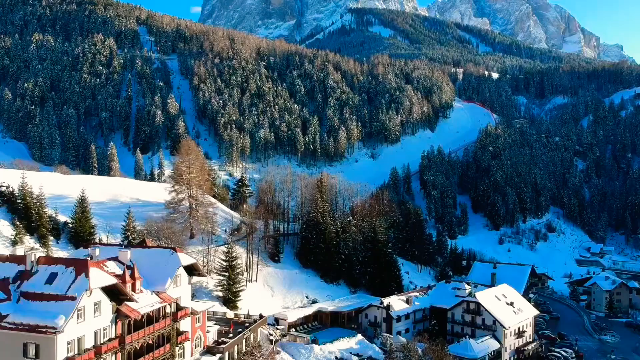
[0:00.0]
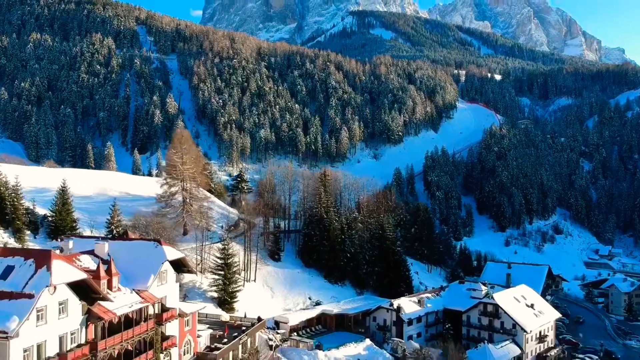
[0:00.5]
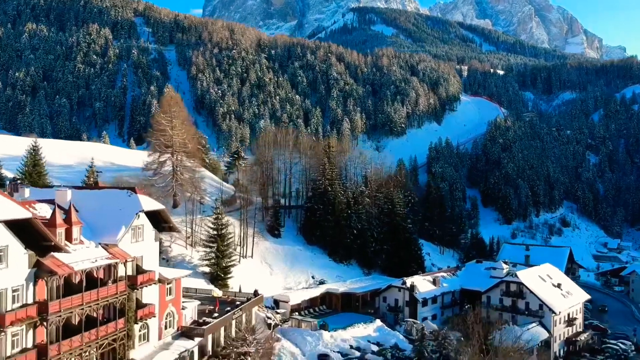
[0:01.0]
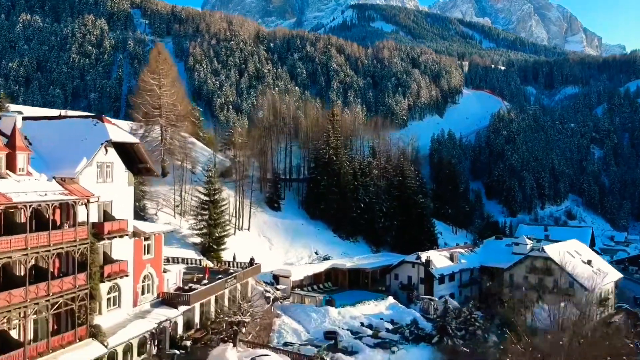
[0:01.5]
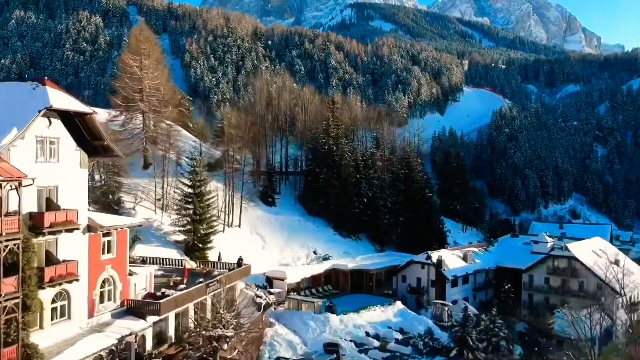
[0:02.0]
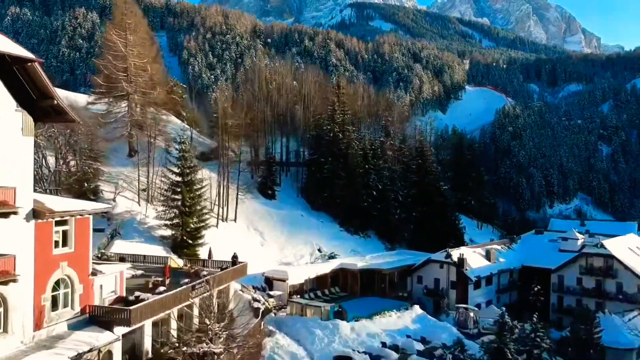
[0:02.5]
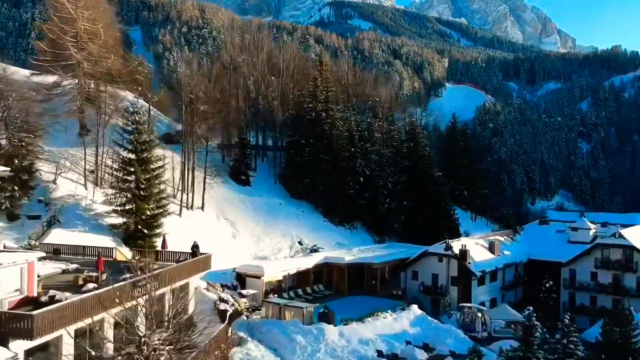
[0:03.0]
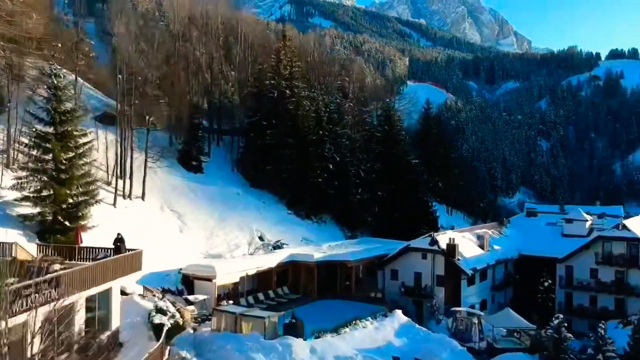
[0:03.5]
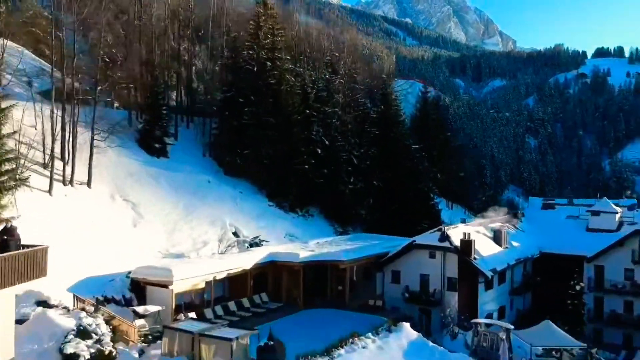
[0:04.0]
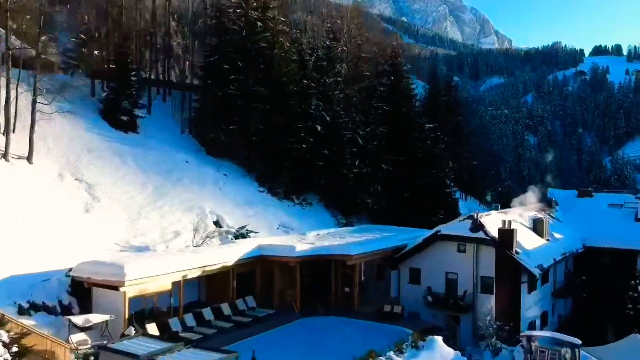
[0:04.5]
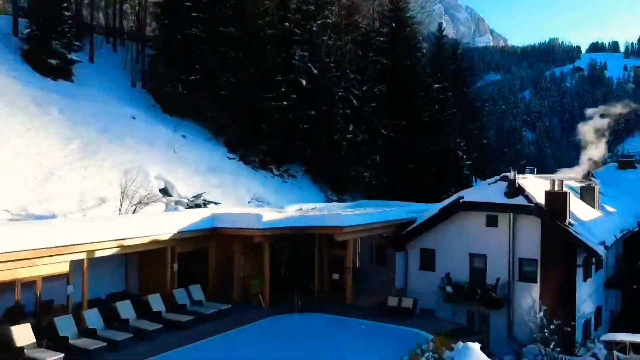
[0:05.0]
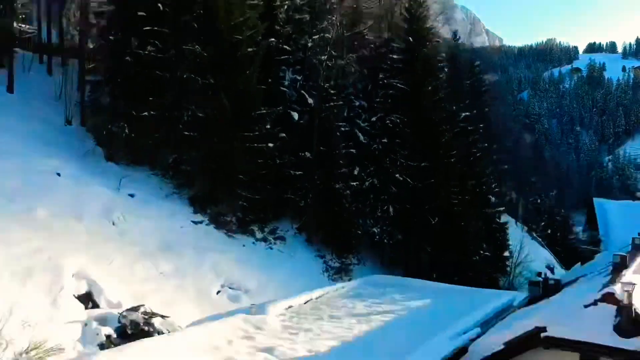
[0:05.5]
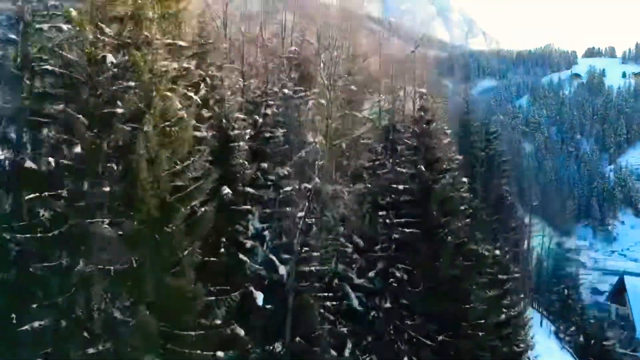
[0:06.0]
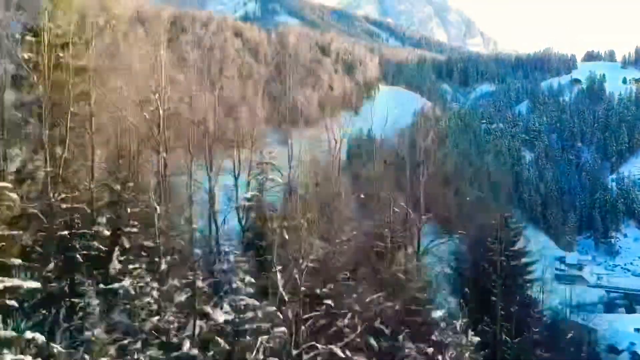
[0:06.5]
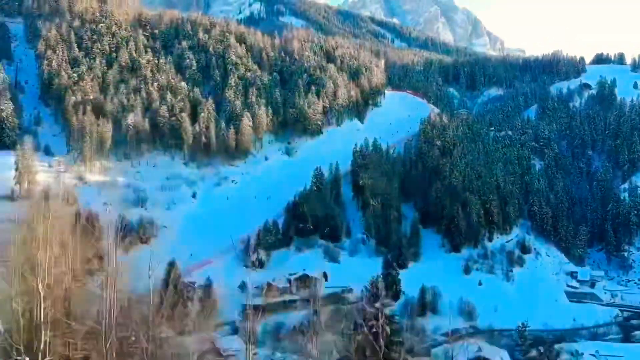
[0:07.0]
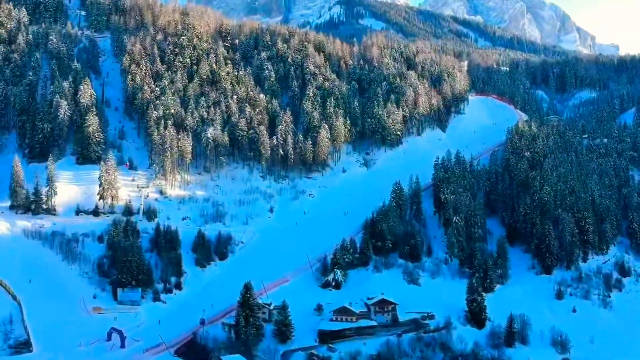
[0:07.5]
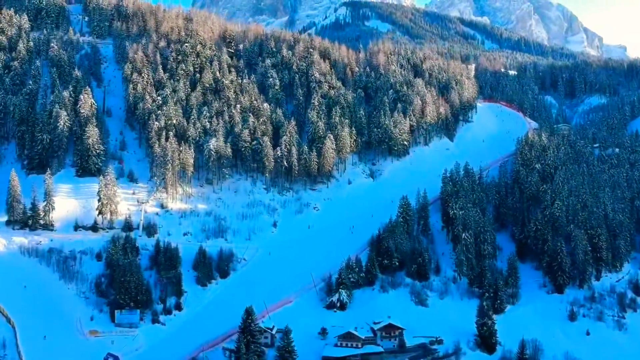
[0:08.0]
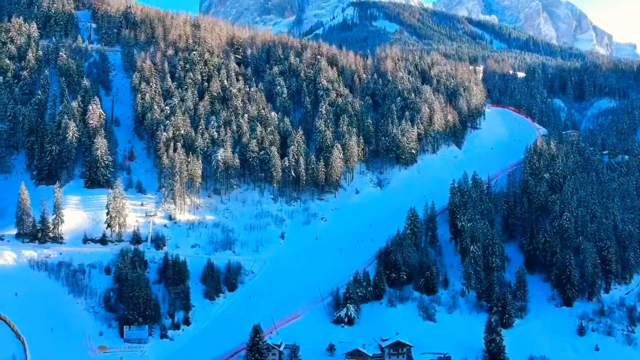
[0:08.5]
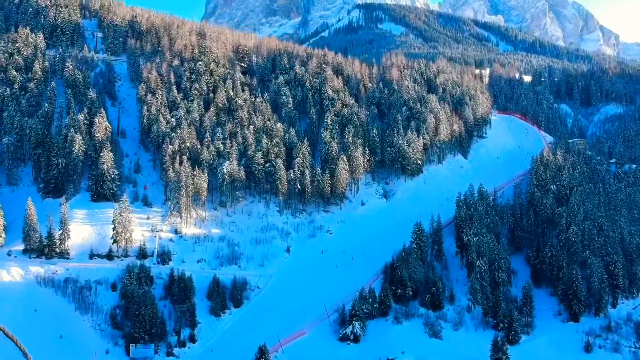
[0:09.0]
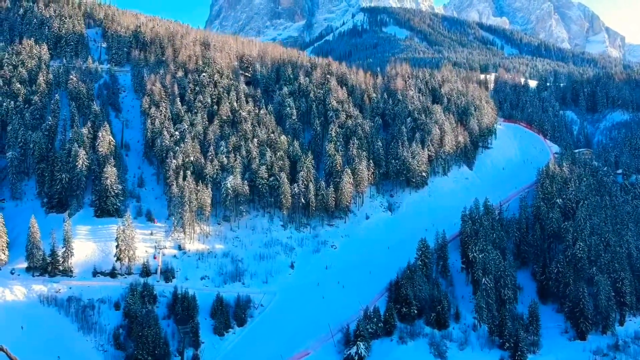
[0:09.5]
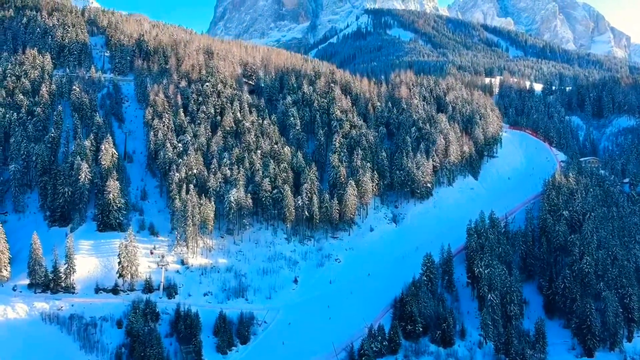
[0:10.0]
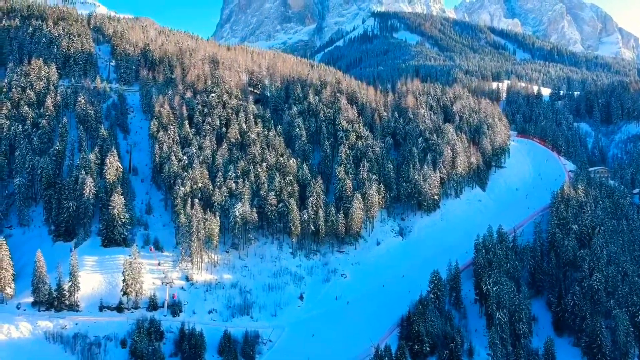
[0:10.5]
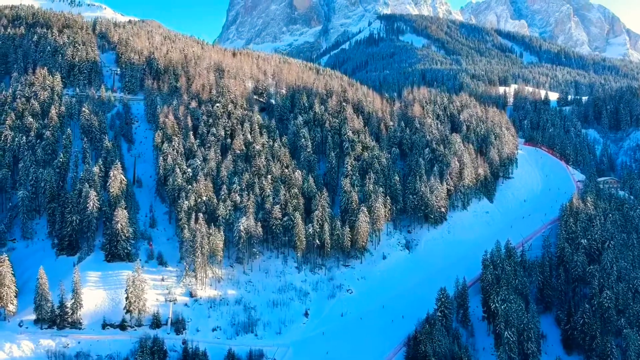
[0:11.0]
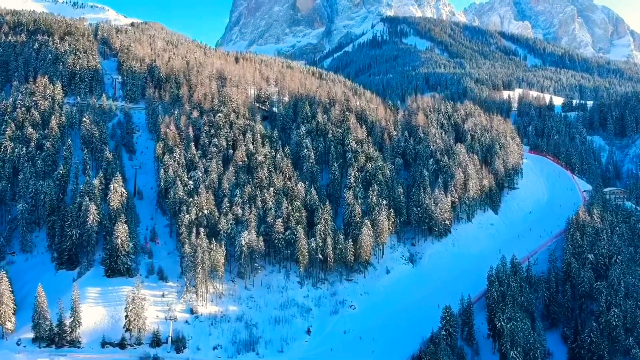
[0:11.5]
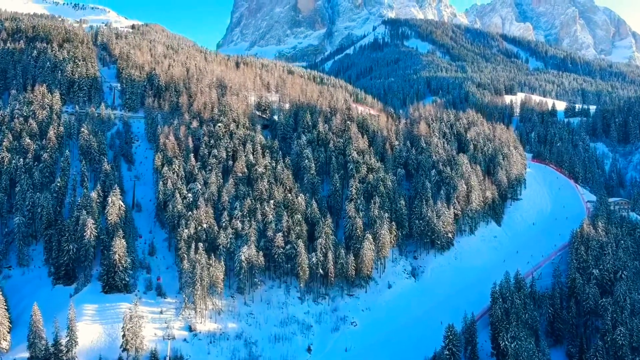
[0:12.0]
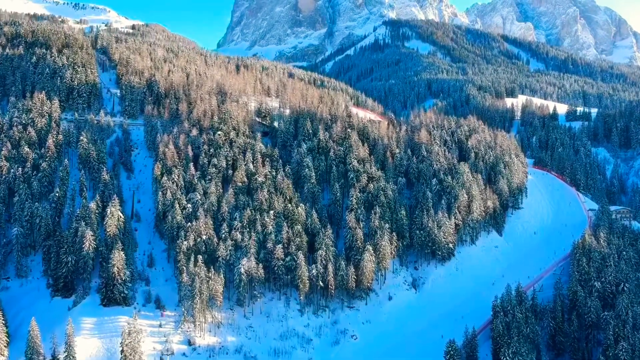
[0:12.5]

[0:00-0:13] A mountainous area appears in the background as the camera kind of rises into the air, almost as if it were in a helicopter or taking aerial shots from above. Pine trees are at the bottom. A lot of snow has fallen; it is mostly no longer on the trees but still covers the ground, and some pine trees in the shade still have snow on them. A chimney has smoke coming off of it, and a blue sky is in the background.